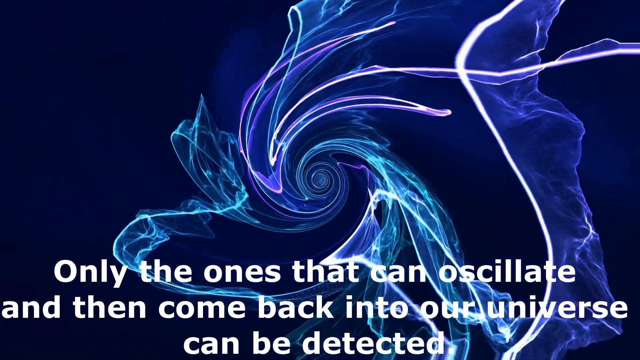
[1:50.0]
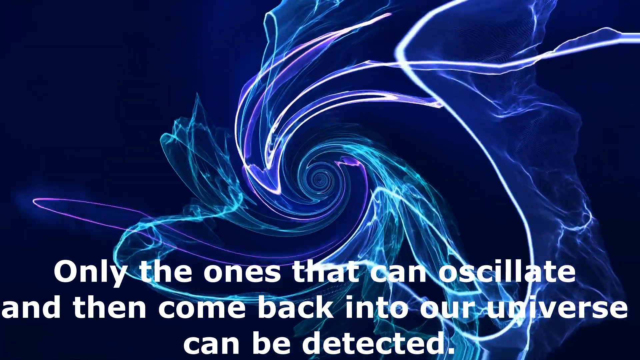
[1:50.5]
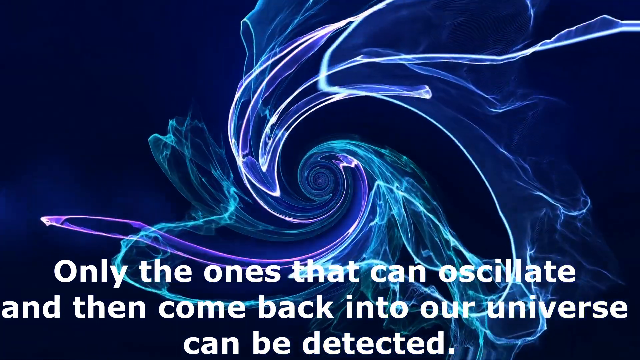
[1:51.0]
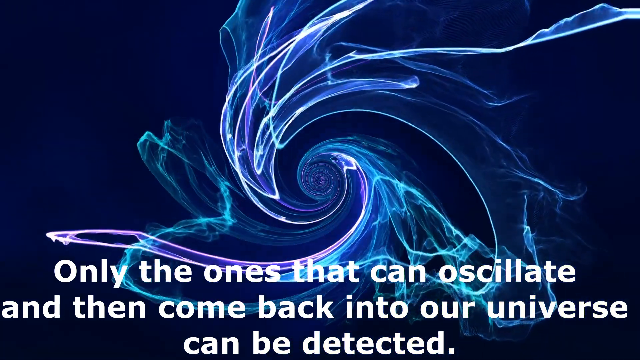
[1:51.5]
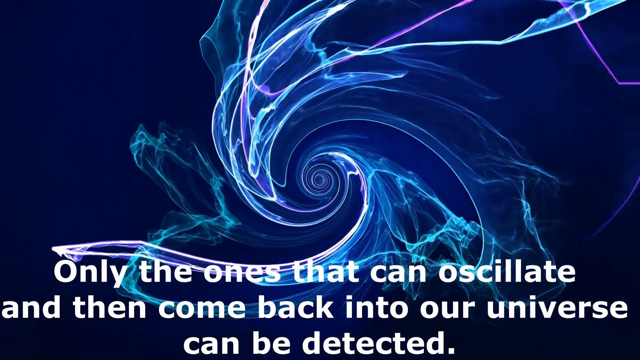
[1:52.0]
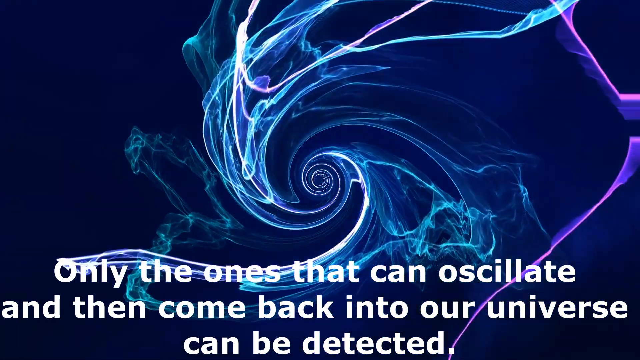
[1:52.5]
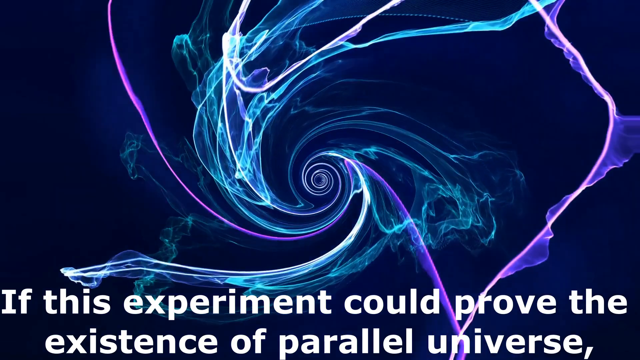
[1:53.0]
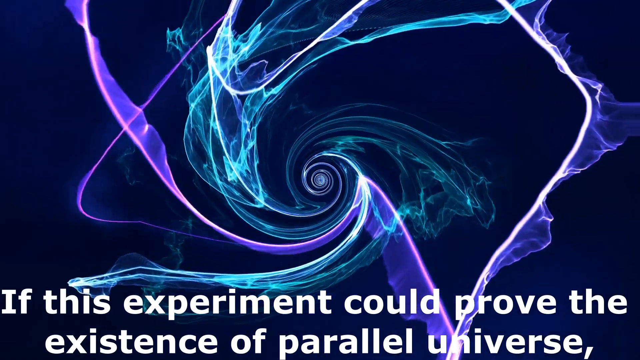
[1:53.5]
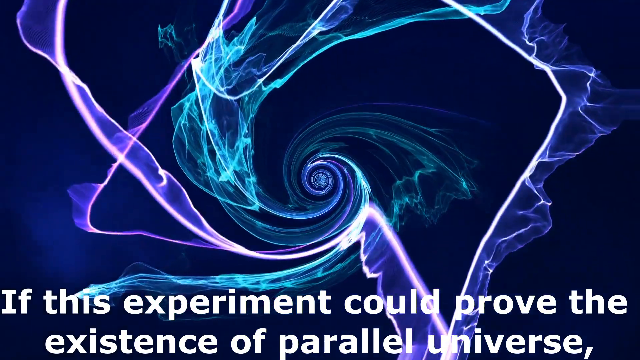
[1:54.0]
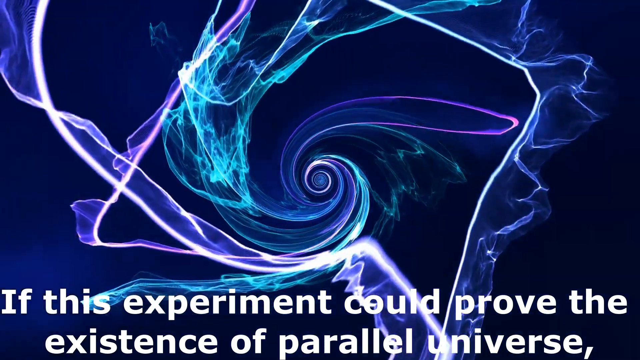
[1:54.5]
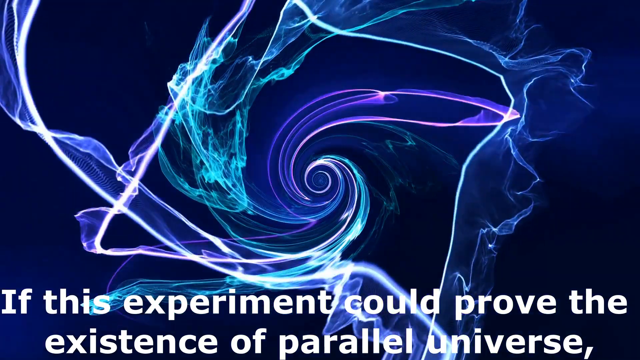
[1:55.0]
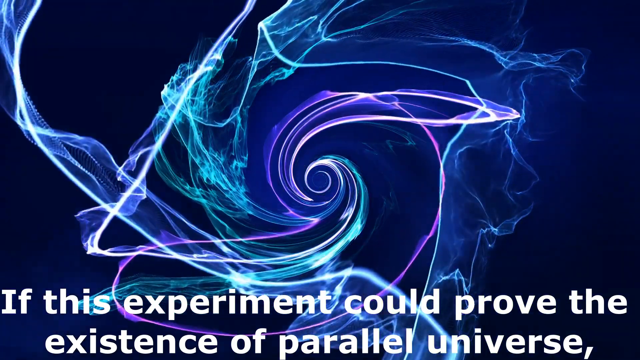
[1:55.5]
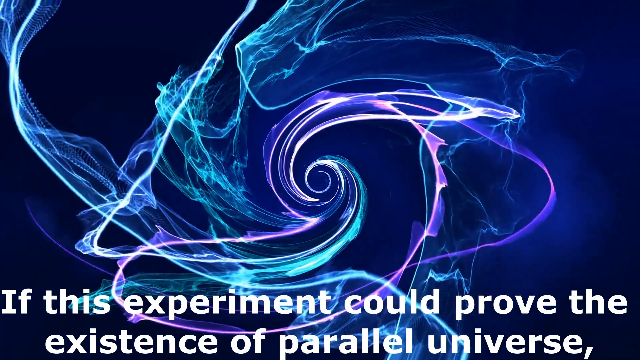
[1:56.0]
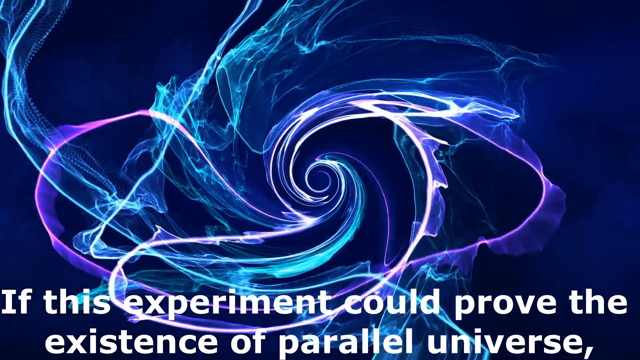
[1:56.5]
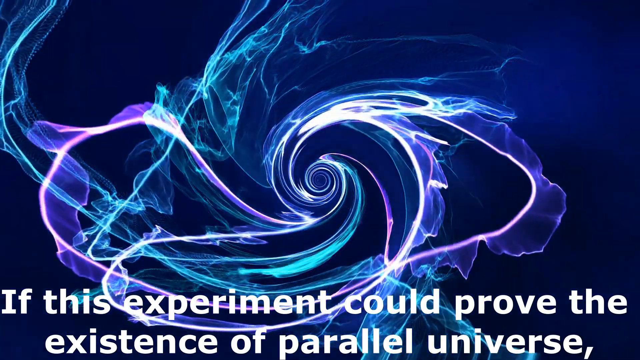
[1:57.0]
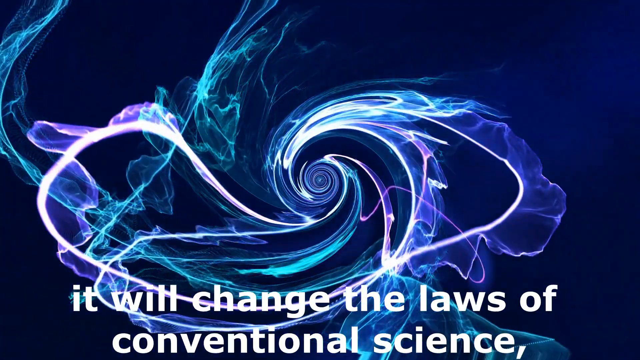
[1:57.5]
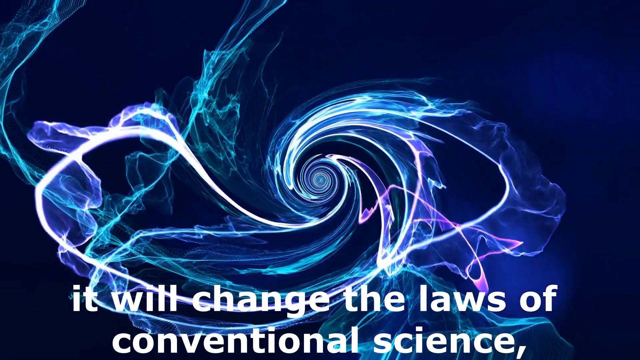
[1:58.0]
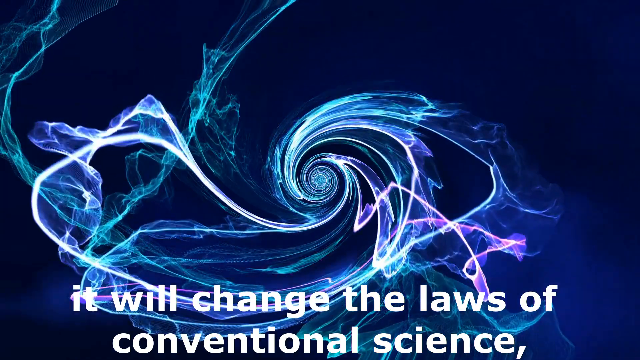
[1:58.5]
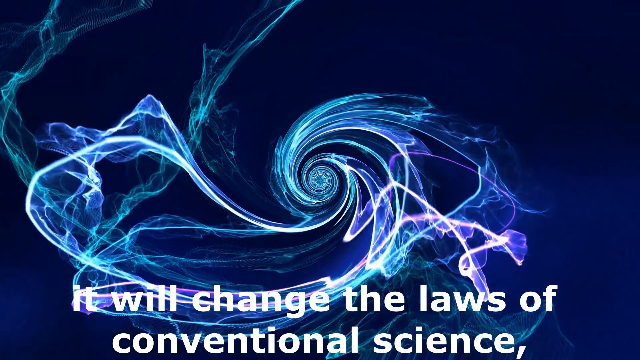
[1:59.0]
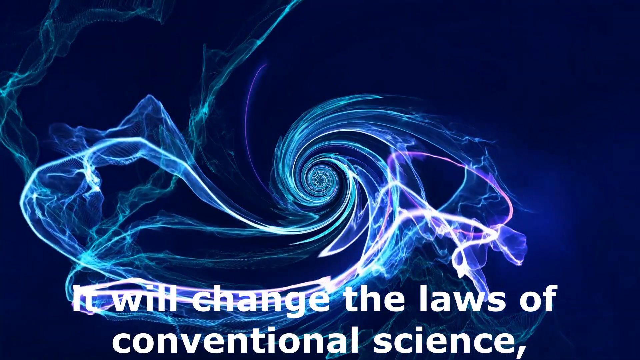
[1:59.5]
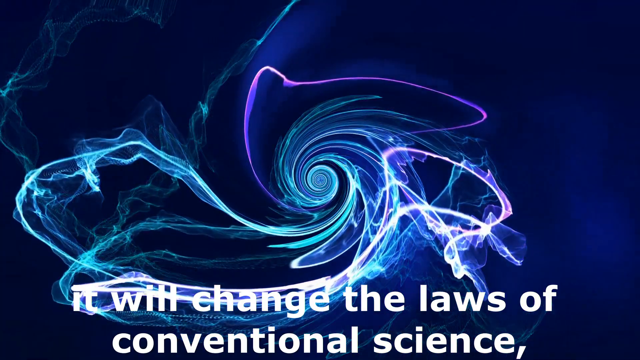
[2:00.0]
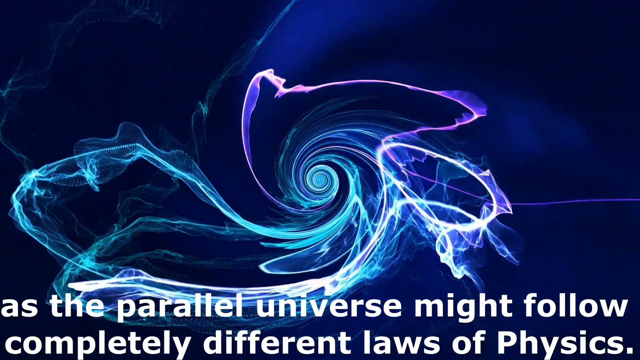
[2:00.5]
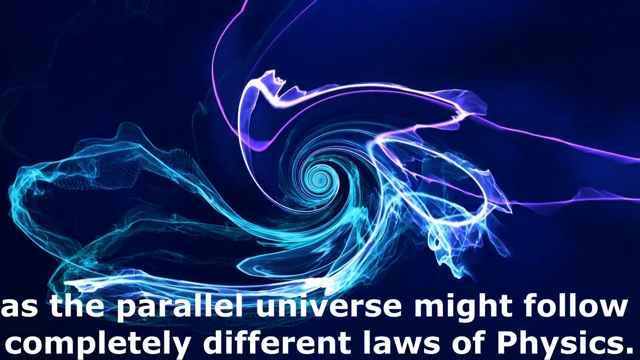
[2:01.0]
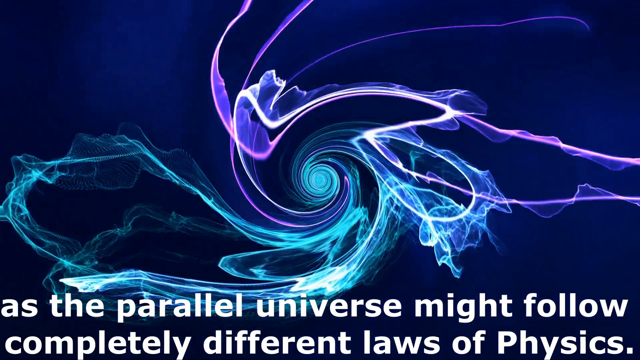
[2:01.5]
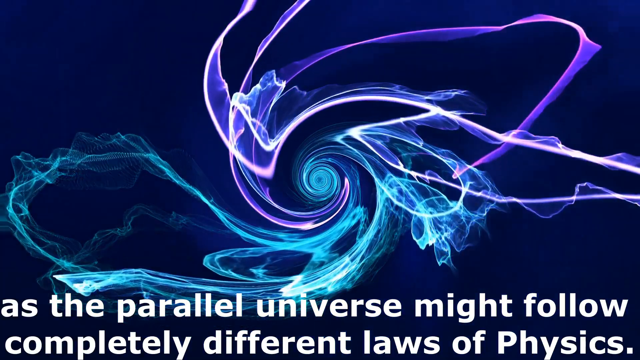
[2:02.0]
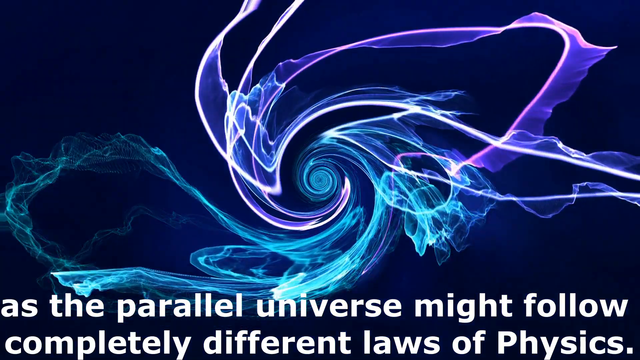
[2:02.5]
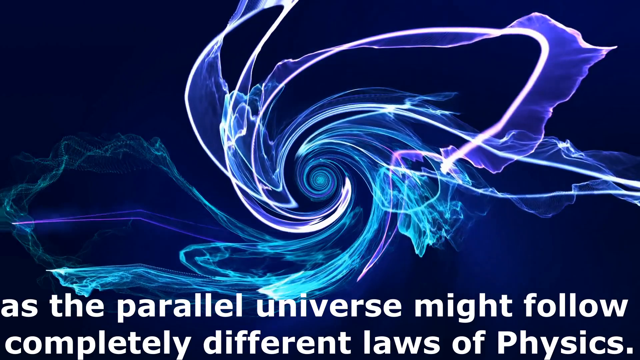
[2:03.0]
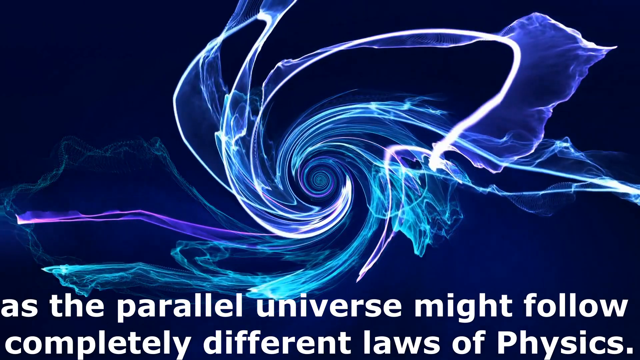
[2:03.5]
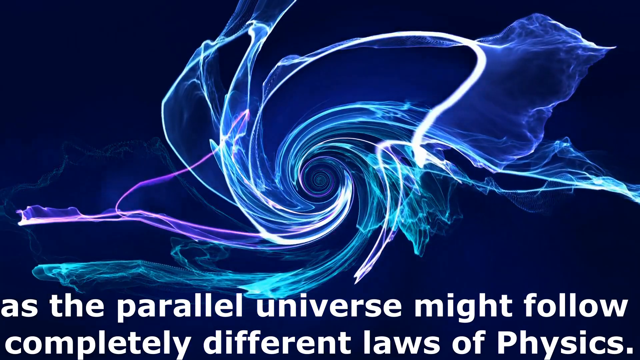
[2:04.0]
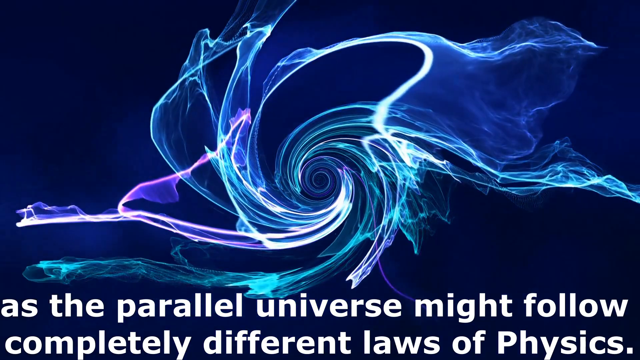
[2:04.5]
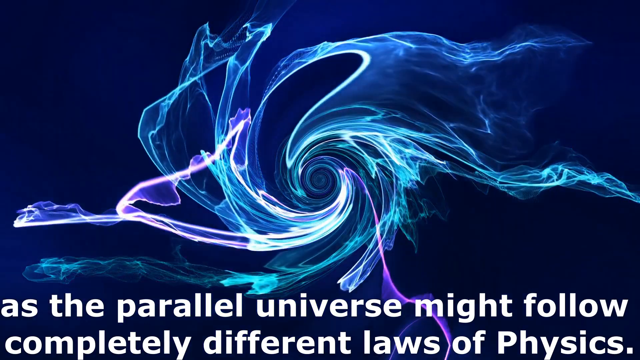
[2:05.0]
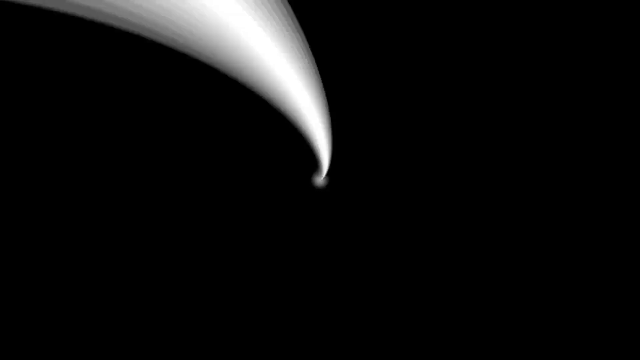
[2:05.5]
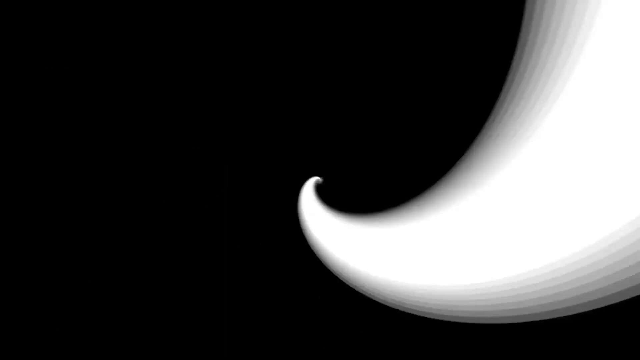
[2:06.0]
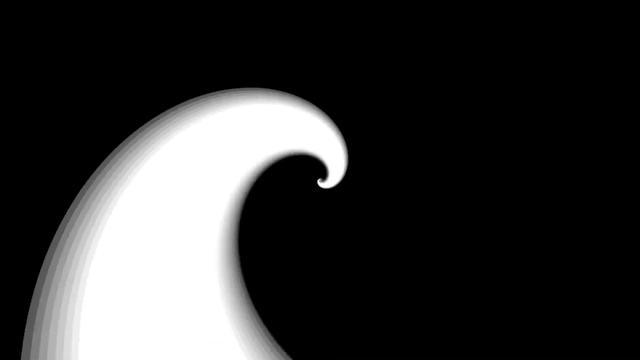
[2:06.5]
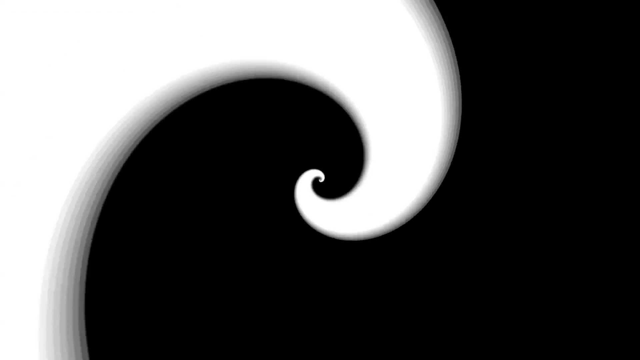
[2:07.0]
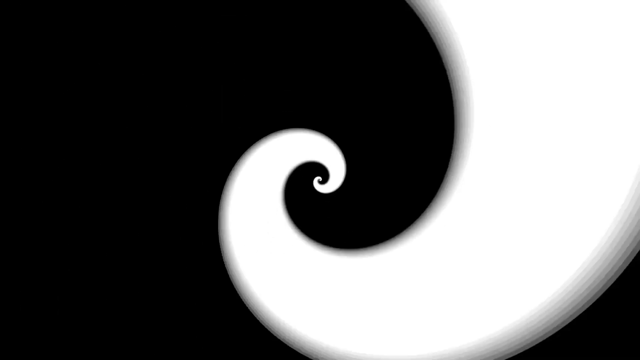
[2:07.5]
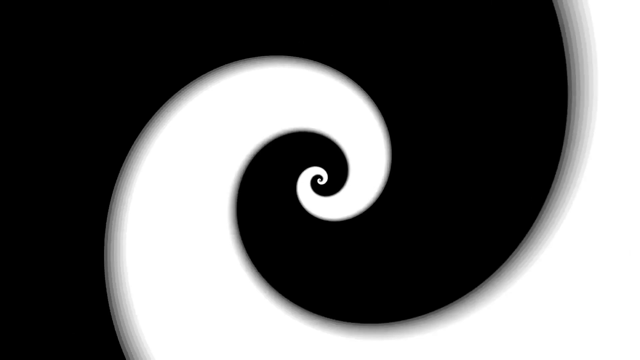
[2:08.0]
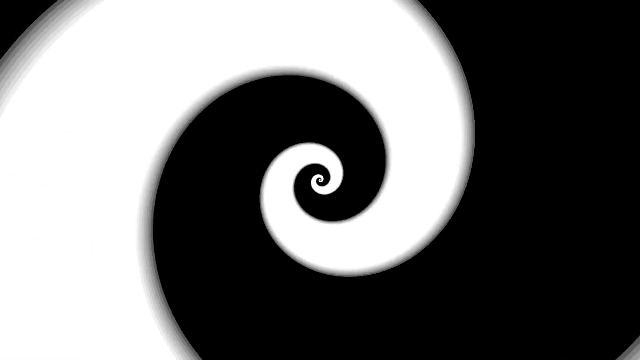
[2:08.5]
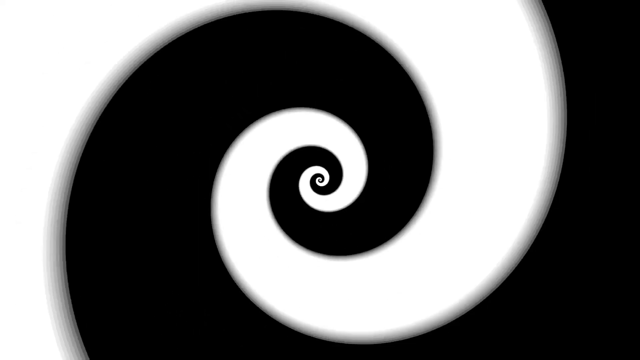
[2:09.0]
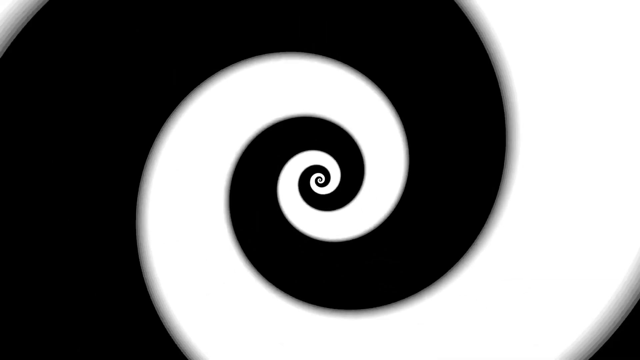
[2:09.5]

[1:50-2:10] Captions at the bottom read: "only the ones that can oscillate and then come back into our universe can be detected." A following caption says that if this could prove the existence of parallel universe "it will change the laws of conventional science as the parallel universe might follow completely different laws of physics." Spirals of light keep moving on a dark blue background; they are very white, with some looking purple and some blue, forming a spiral in the center. The scene then changes to a black background with a white spiral moving around in a very hypnotizing way.